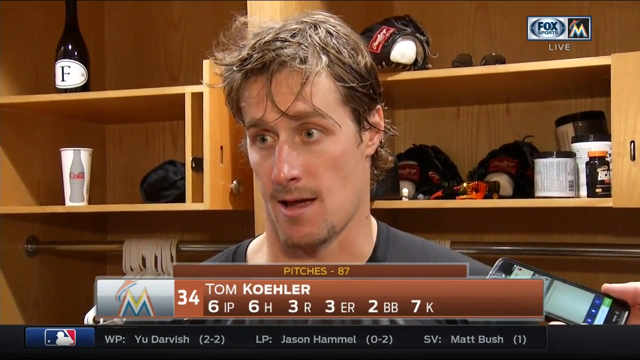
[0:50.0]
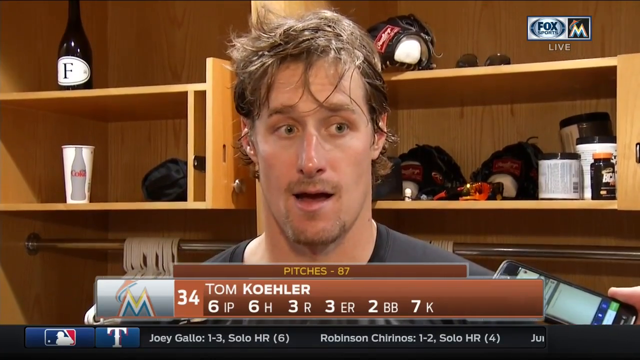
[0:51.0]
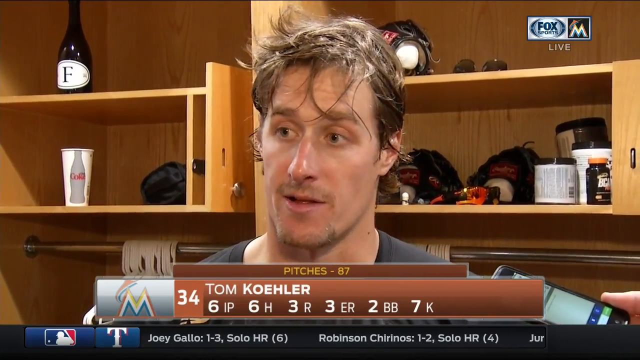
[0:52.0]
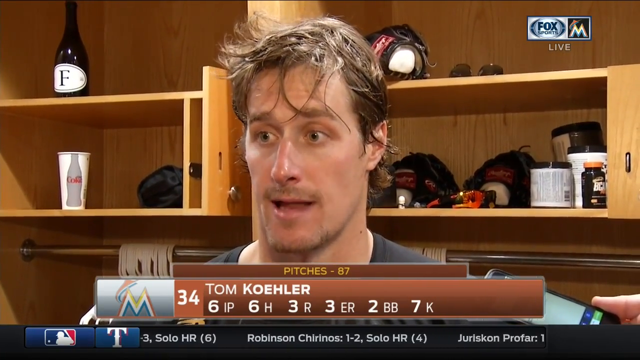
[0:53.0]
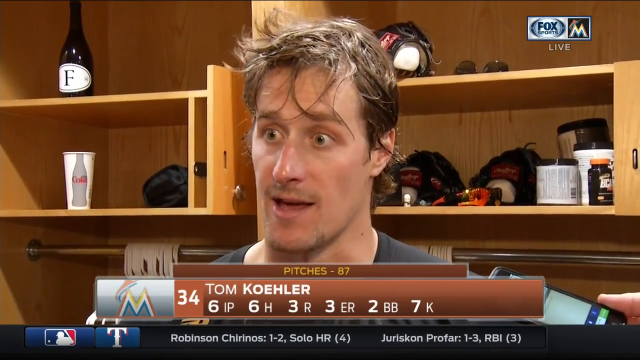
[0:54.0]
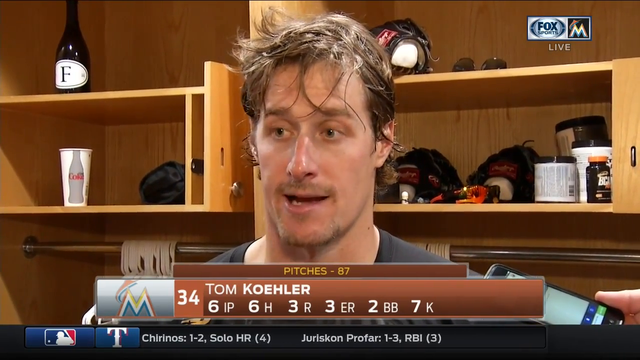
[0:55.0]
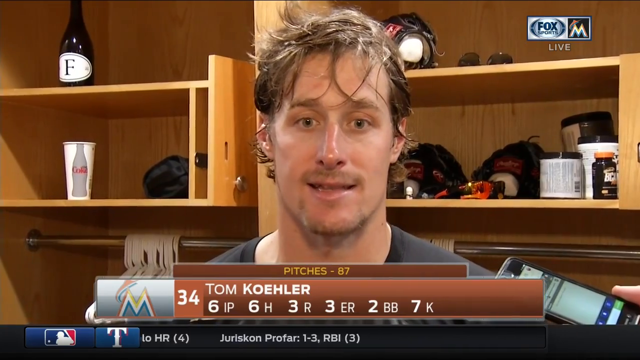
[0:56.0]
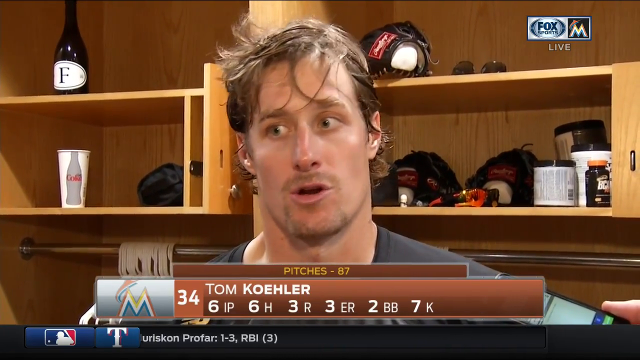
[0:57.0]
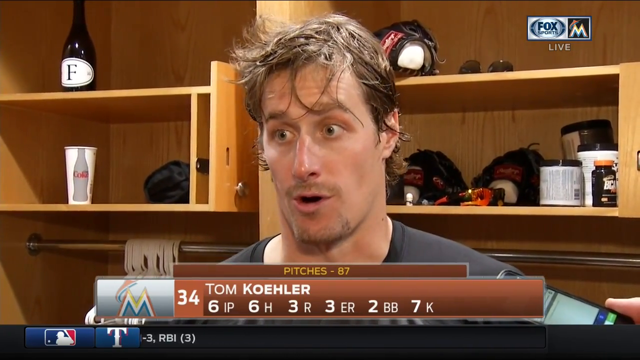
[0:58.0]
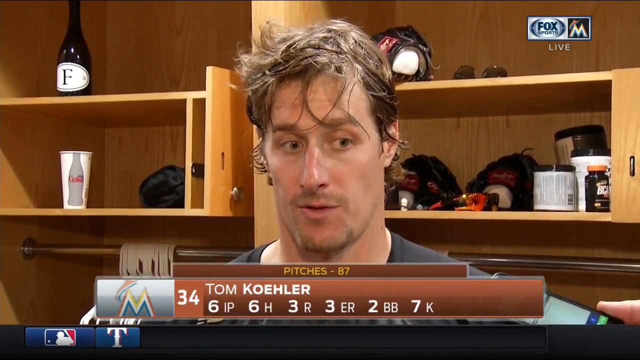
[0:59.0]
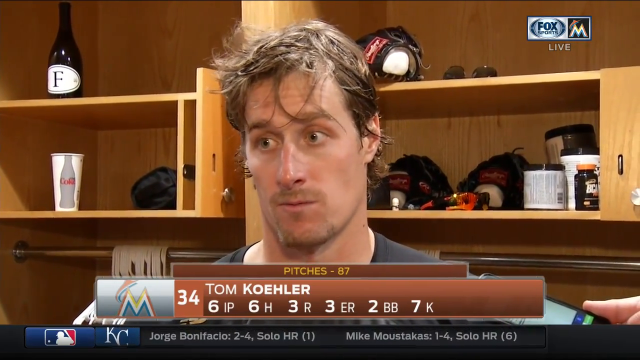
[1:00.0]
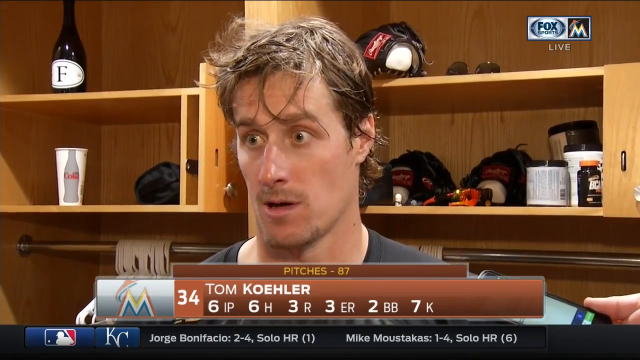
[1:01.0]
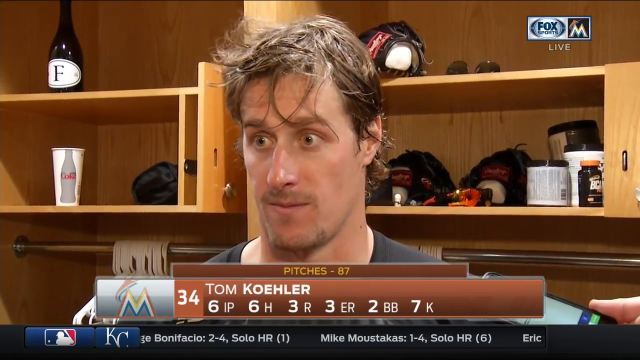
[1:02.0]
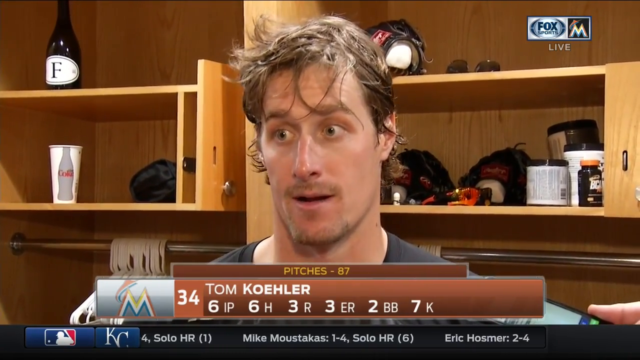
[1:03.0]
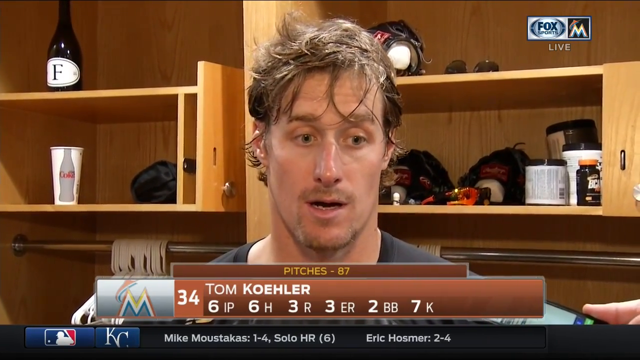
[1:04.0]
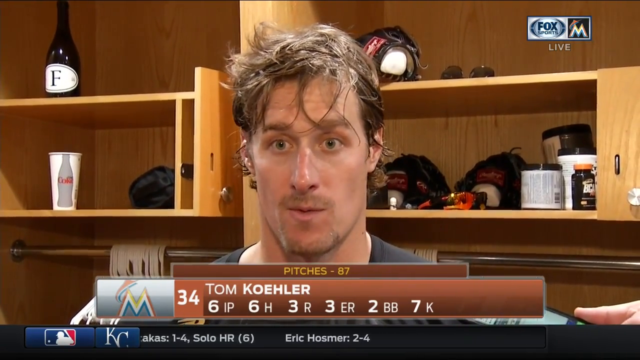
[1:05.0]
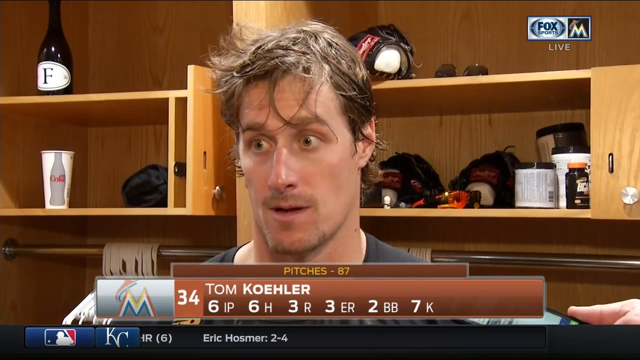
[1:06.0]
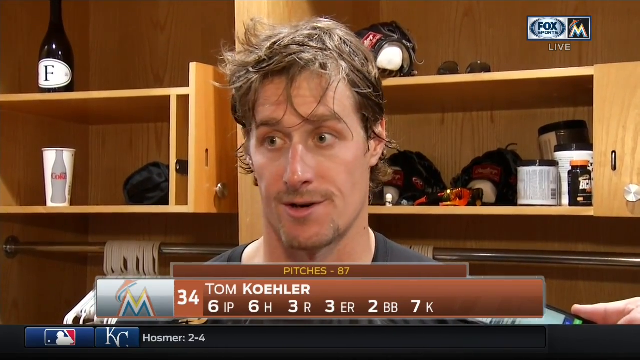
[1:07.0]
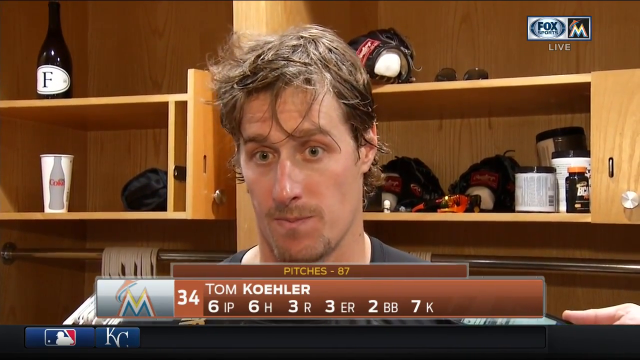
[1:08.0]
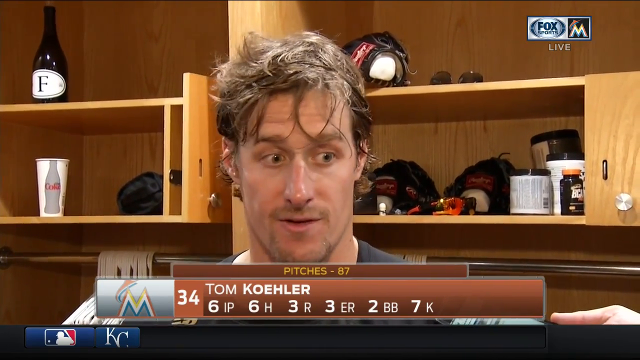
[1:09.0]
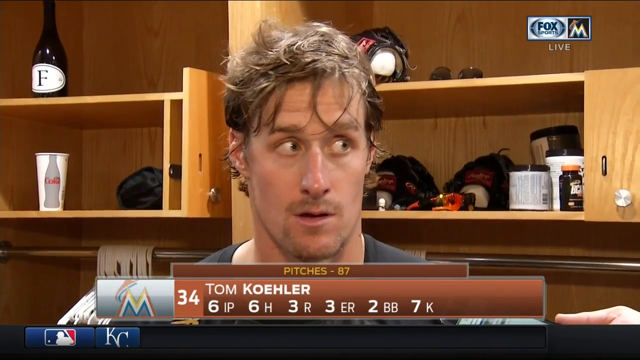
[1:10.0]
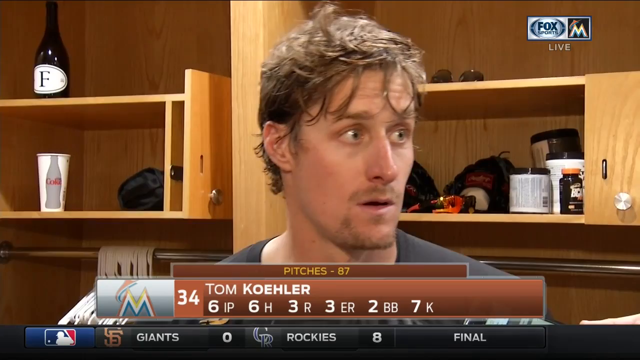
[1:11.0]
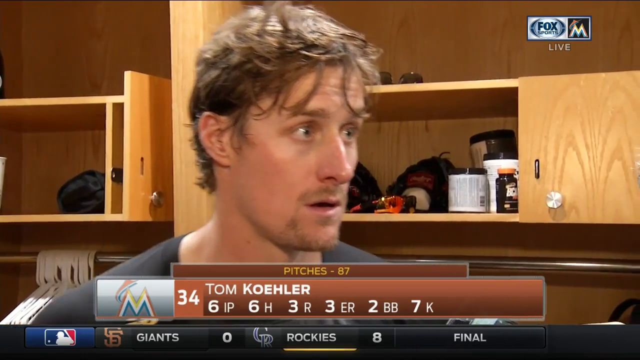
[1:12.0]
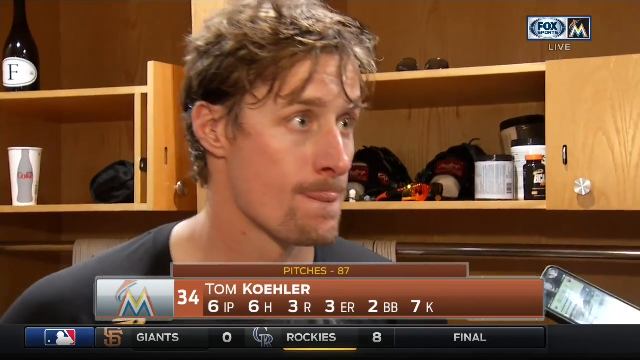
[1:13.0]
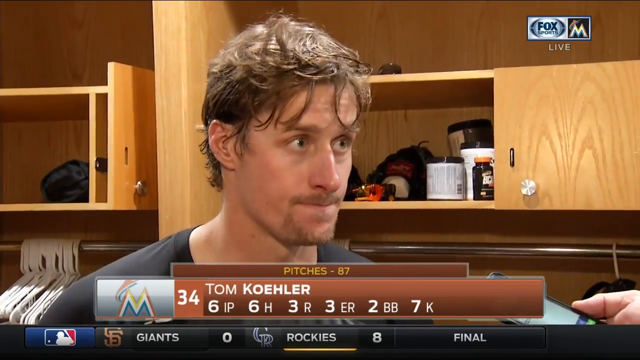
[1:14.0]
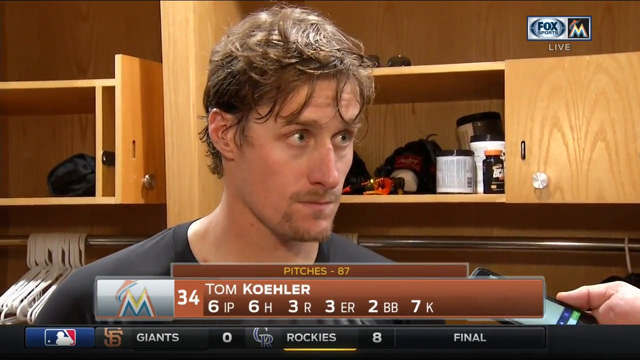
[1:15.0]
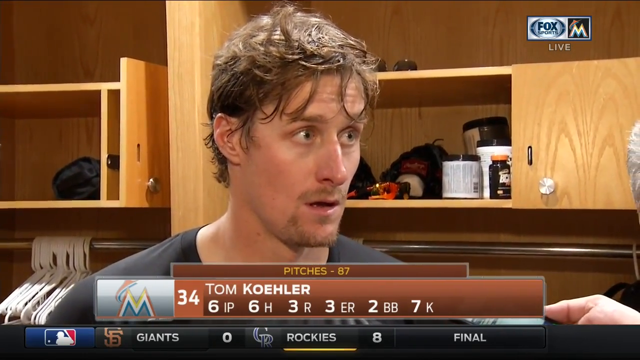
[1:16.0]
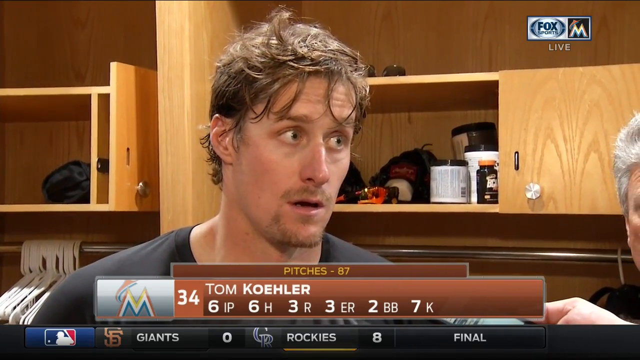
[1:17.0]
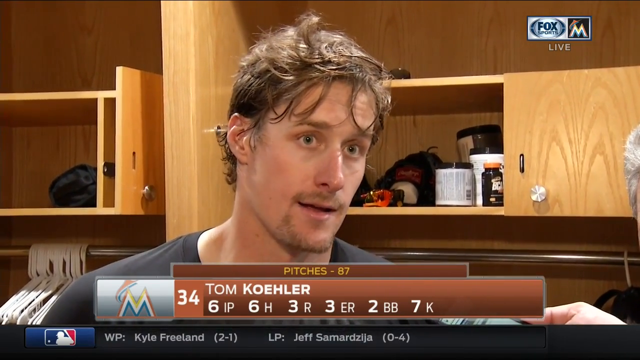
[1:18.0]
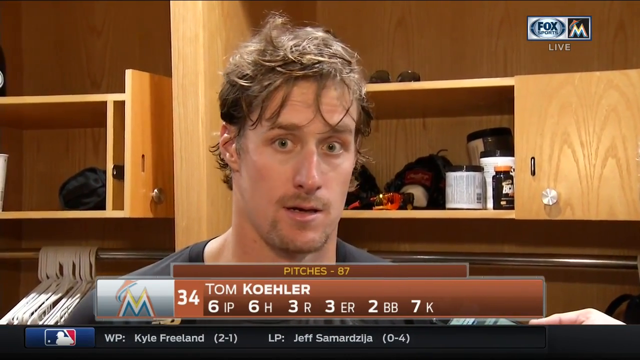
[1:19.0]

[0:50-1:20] He continues talking, facing a reporter on the left, his right. The person holding the cell phone is still visible, holding it screen side up as if using it as a microphone. He then turns his body toward the reporter on the right and appears to address that reporter. At the right edge of the frame, just the edge of someone with white or gray hair is visible. He then looks to the left again. The wood is stained light or looks like pine and has a lacquer on it. White plastic hangers hang on the bar beneath the shelving and cabinet on the left.